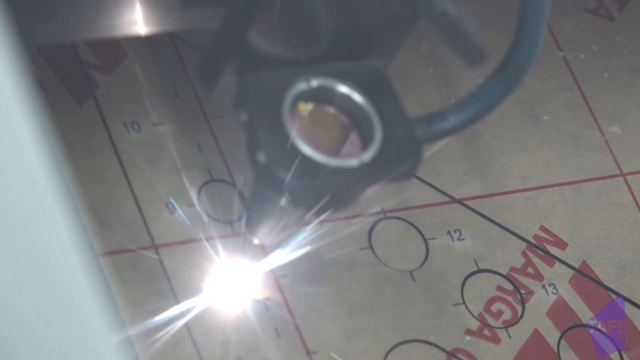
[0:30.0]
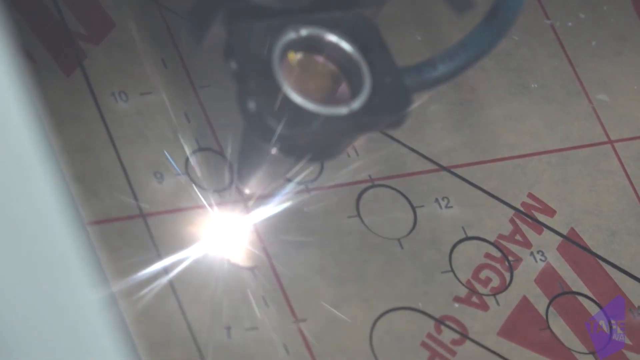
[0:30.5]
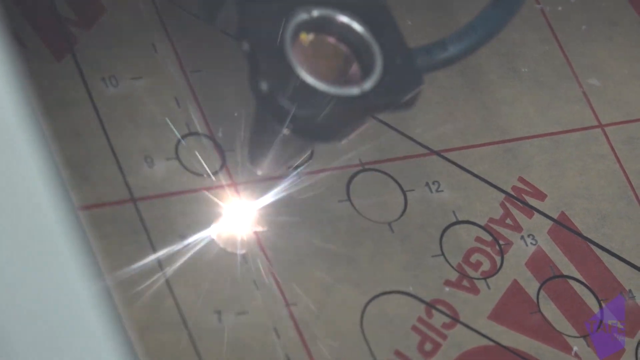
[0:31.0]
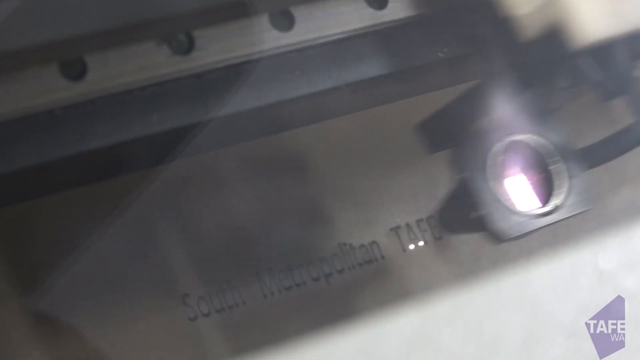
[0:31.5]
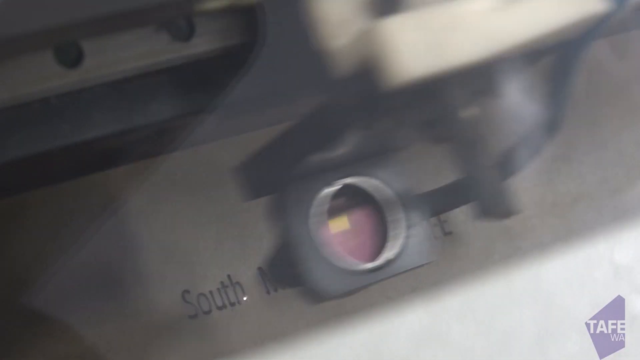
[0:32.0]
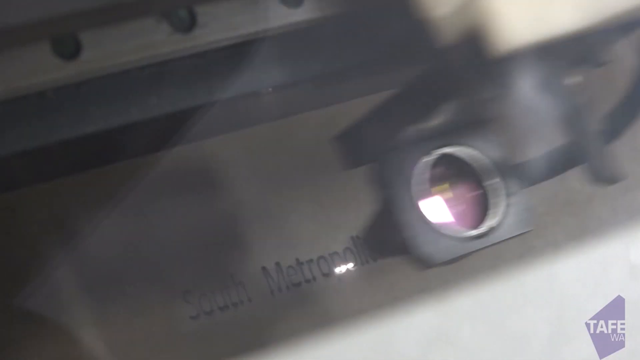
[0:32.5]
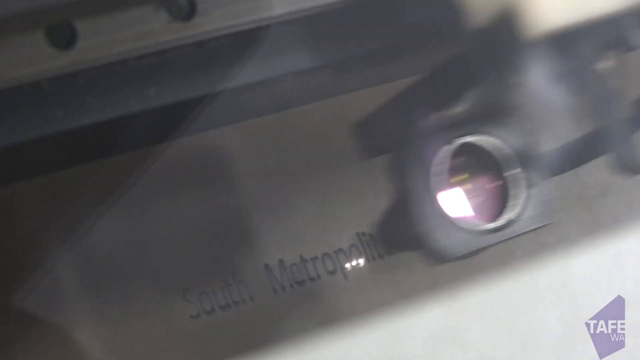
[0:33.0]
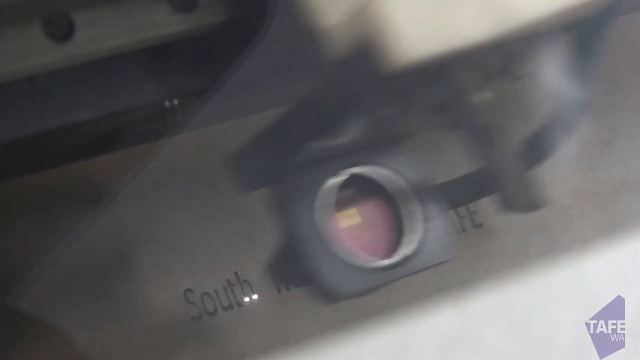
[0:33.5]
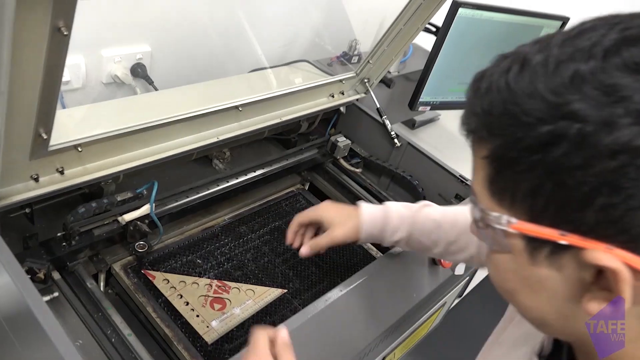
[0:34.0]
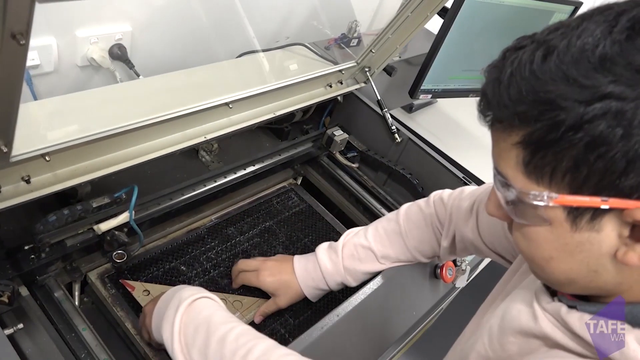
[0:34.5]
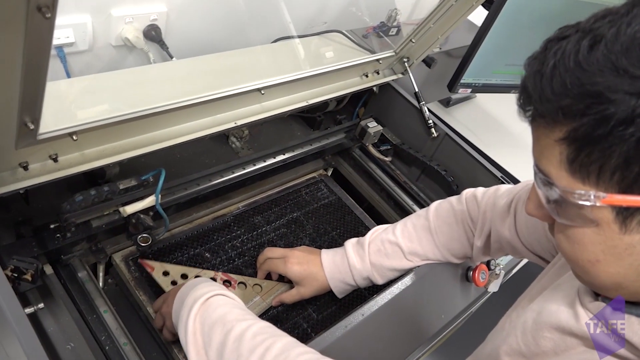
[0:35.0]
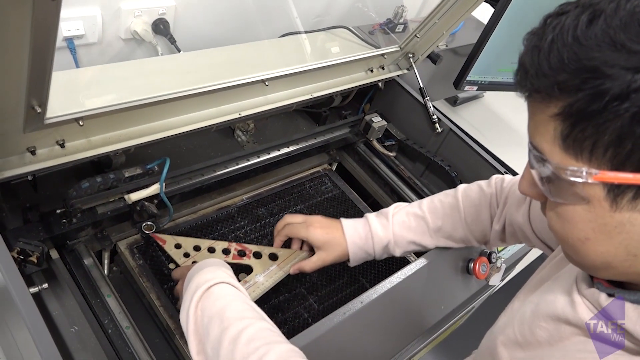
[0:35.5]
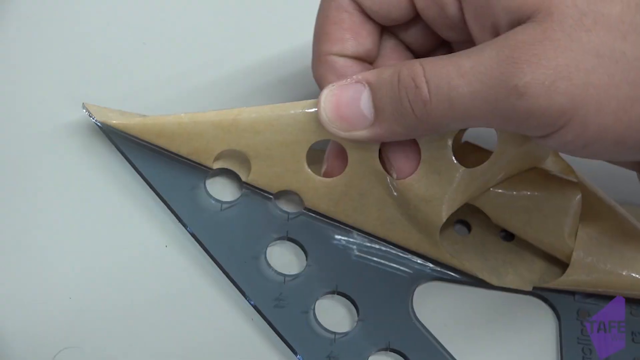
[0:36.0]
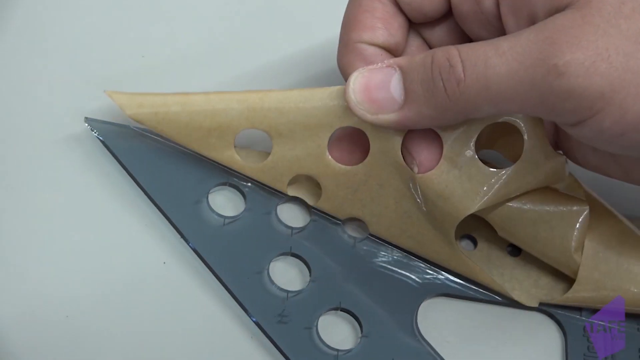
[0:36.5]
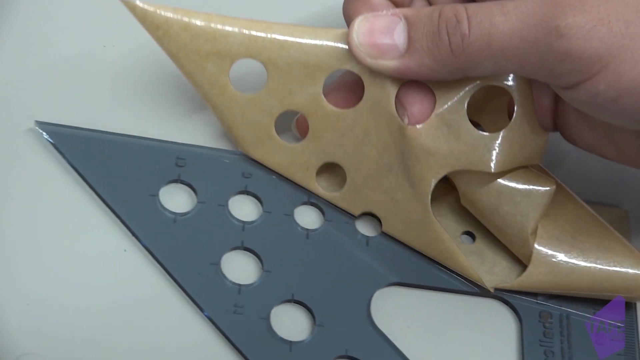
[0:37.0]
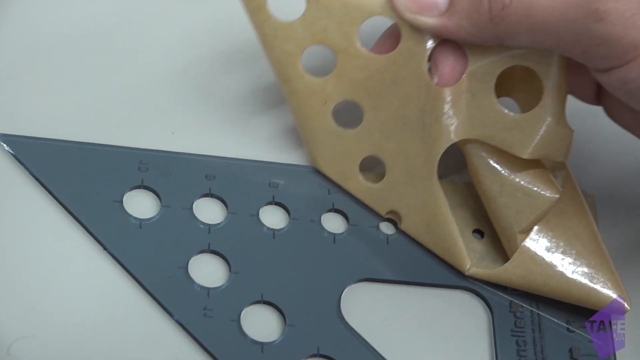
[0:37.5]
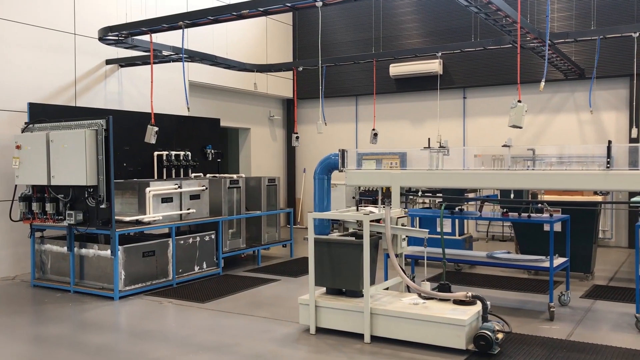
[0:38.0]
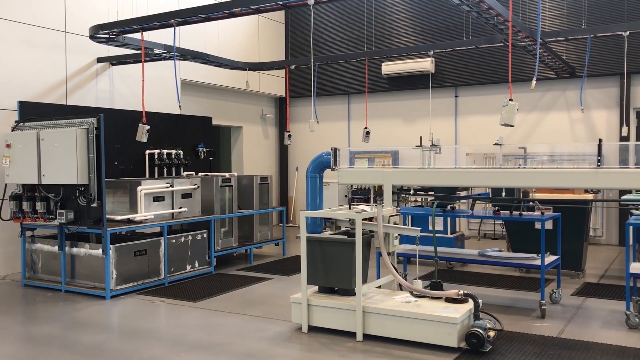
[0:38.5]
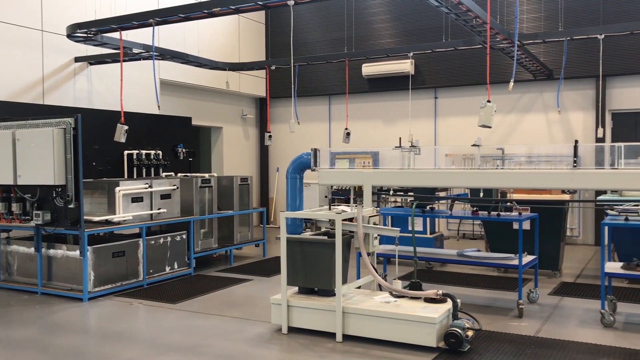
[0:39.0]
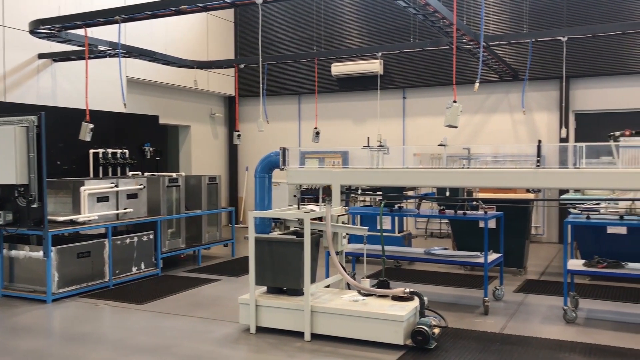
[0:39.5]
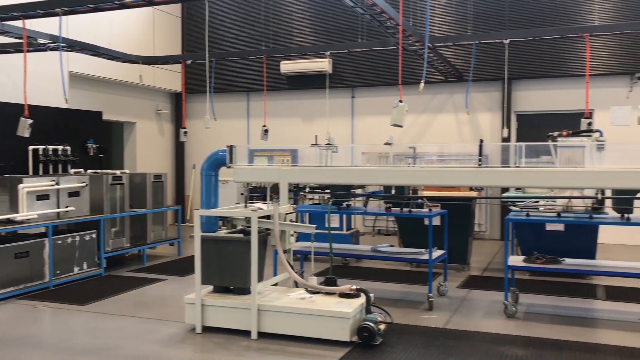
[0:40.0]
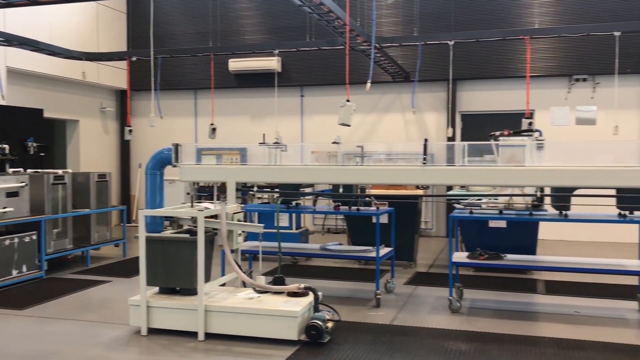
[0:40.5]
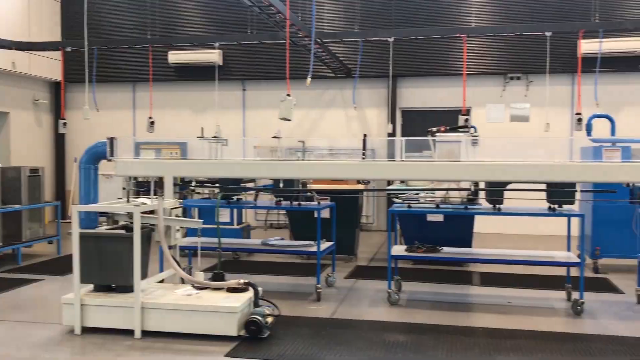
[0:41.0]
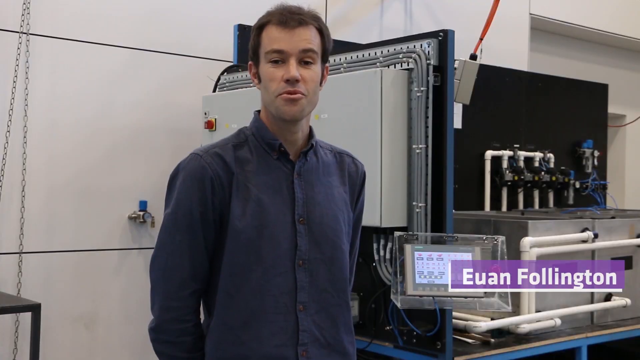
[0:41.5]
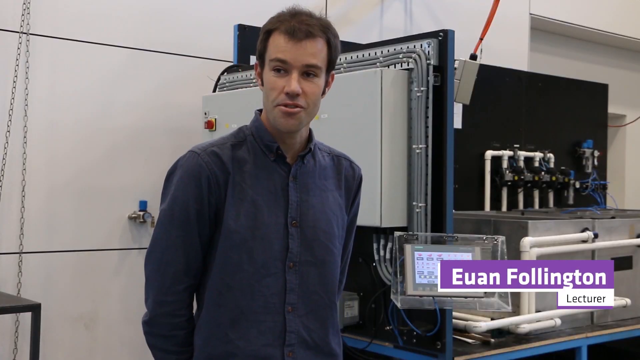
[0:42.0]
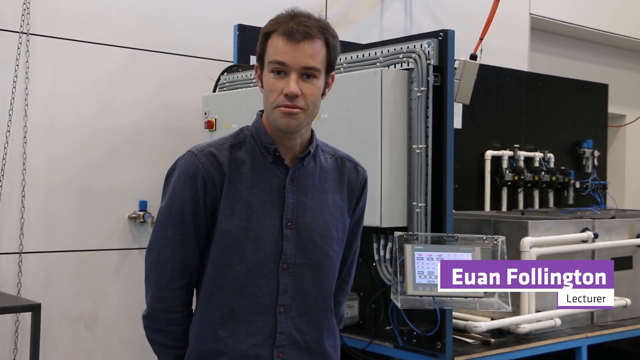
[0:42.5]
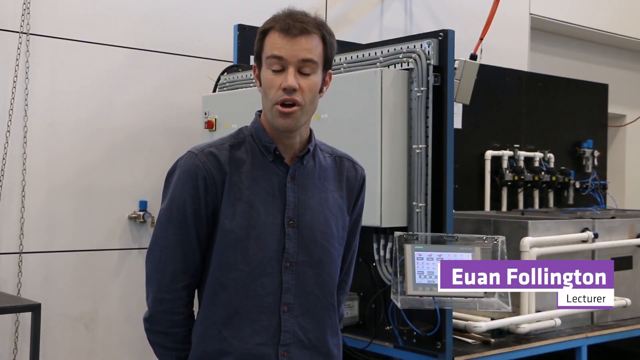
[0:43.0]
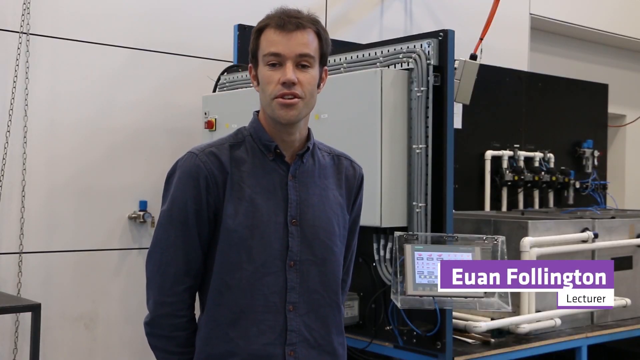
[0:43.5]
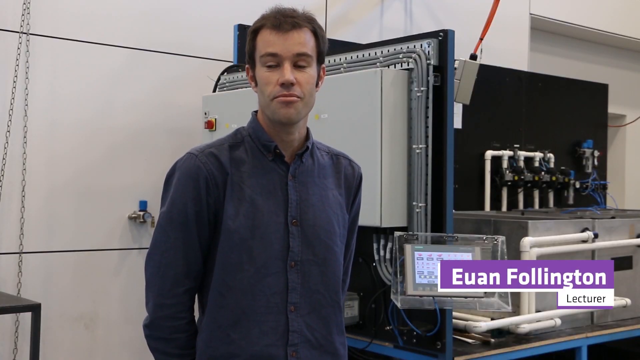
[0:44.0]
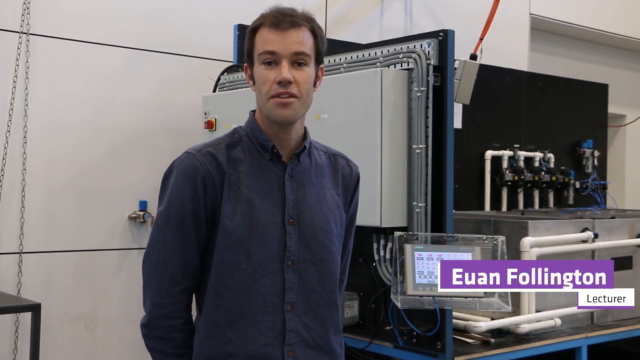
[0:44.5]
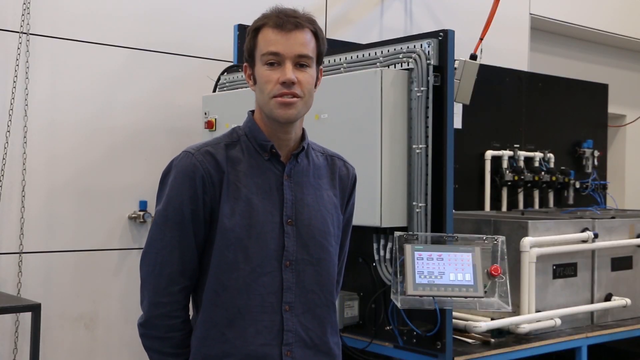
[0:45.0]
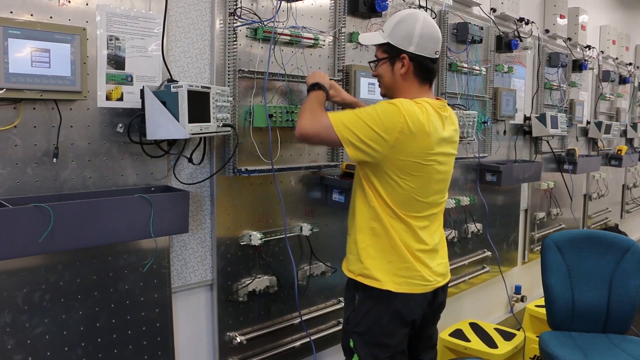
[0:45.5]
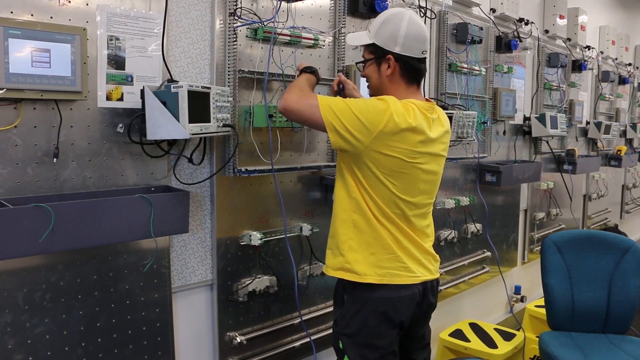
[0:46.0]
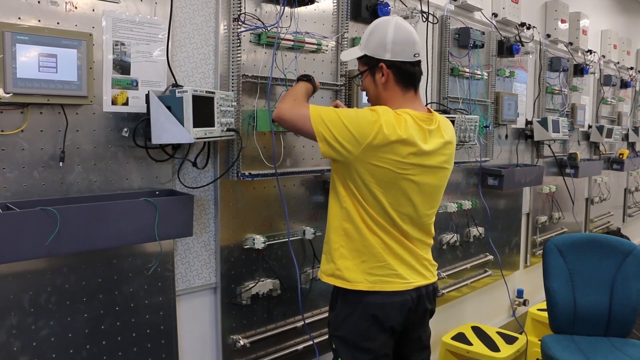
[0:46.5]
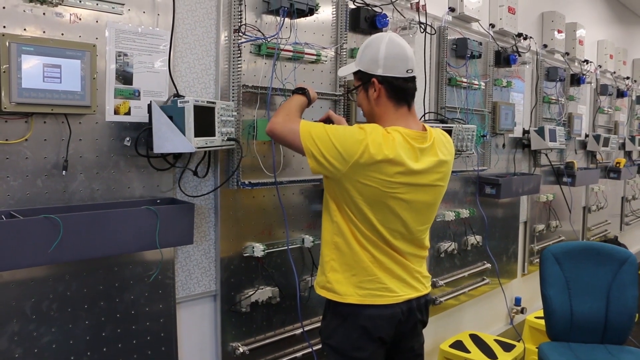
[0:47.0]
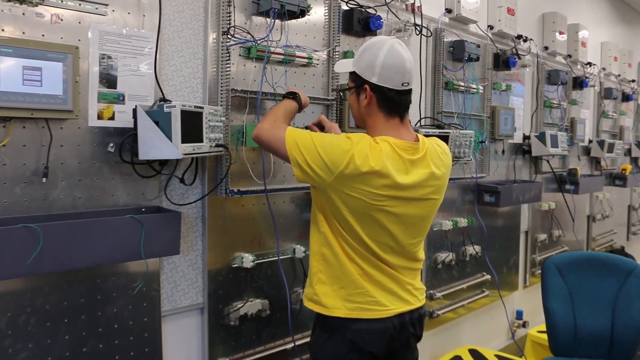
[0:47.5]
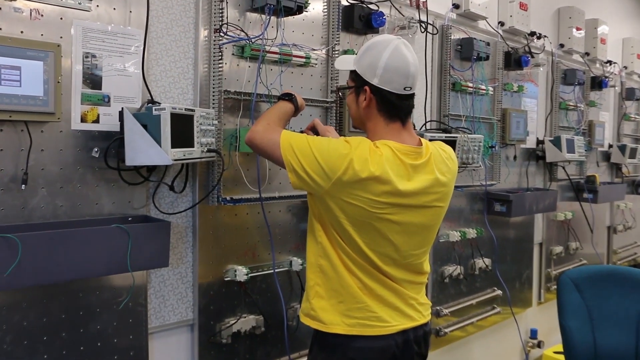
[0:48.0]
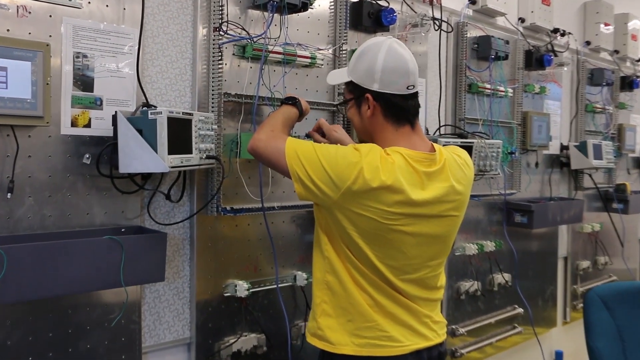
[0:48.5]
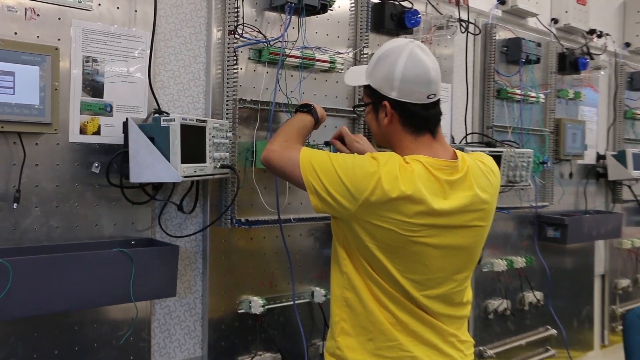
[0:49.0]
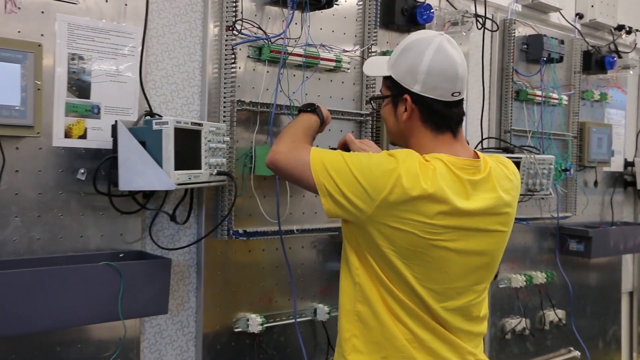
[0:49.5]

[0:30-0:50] The laser printer is shown, then a man wearing goggles pulls out a triangular shape. The first man wears clear goggles with orange frames on the side and a lab coat. The lab is shown, then the video briefly cuts to Ewan Follington, a lecturer: a tall, skinny man in darker clothing with dark, matted, messy hair, a button-up shirt, a receding hairline and balding on top. He looks pretty friendly. The video then switches to a man in a yellow T-shirt wearing goggles, a white hat and a watch. The laser printer prints things and people pull stickers off it; the printed pieces read "South Metropolitan, LTD." The man with glasses and the white hat works on a machine they are apparently having trouble with, and he looks like he is laughing and smiling. There are blue rolling carts, a lot of gray color and many metallic-looking pieces. The shots are quick, about two or three seconds each, jumping from one thing to the next.